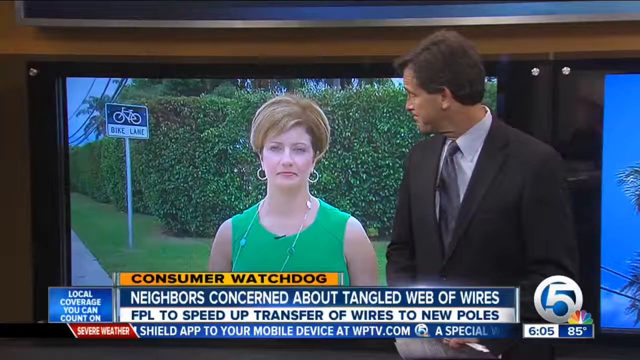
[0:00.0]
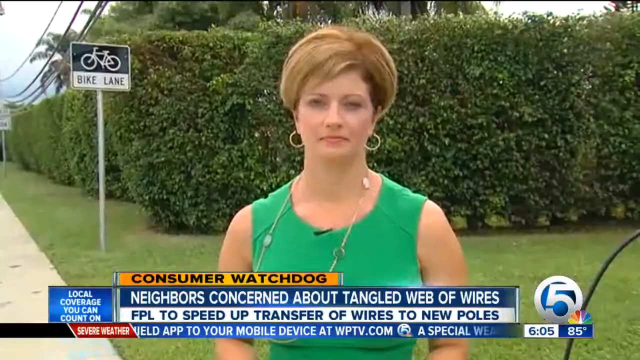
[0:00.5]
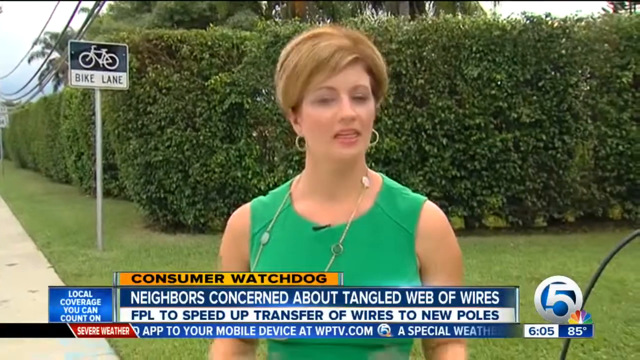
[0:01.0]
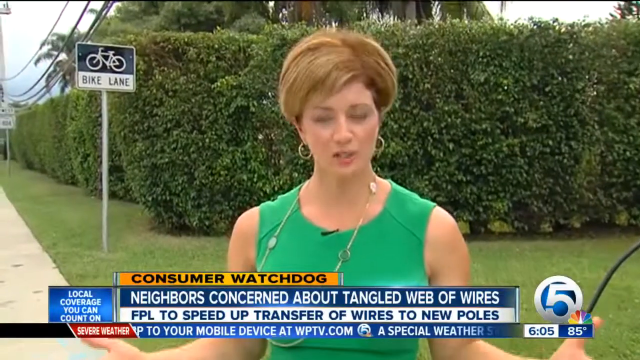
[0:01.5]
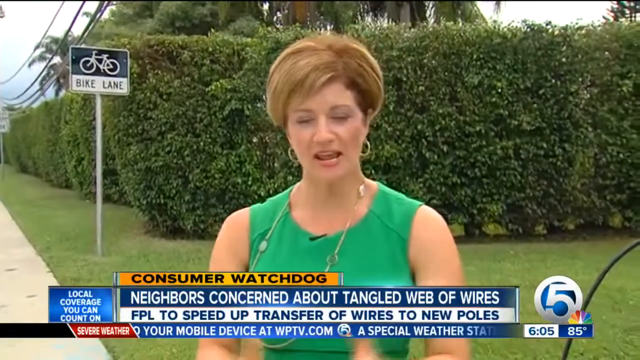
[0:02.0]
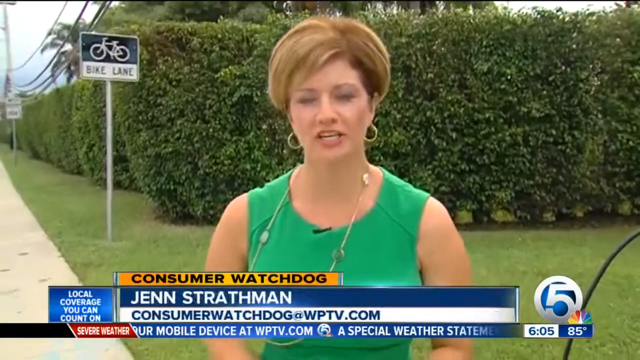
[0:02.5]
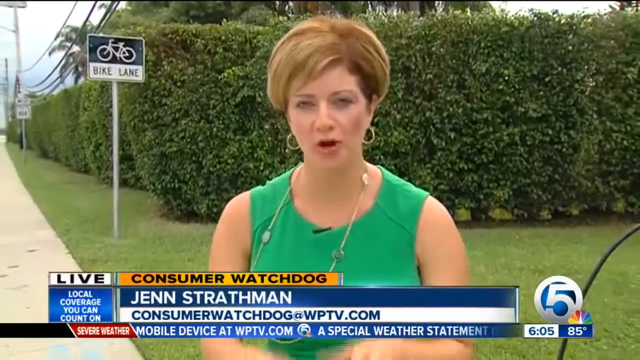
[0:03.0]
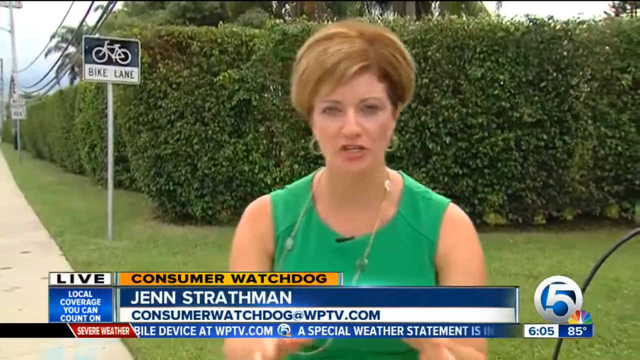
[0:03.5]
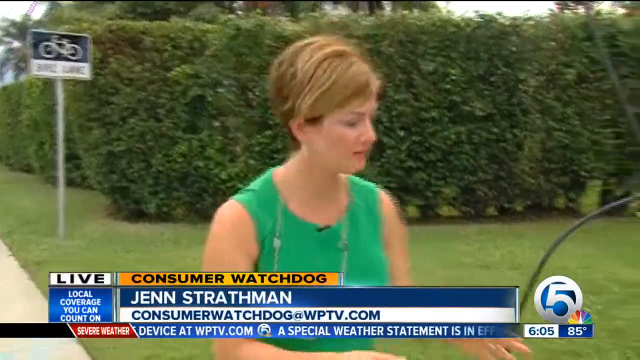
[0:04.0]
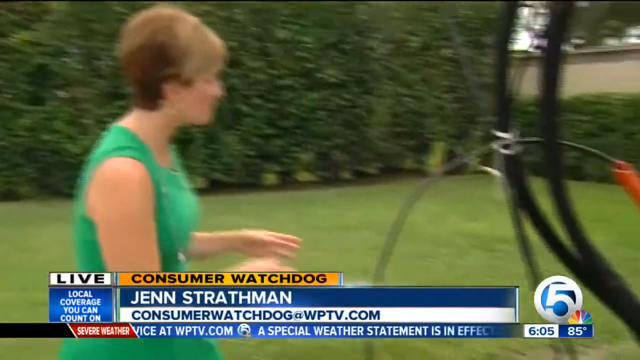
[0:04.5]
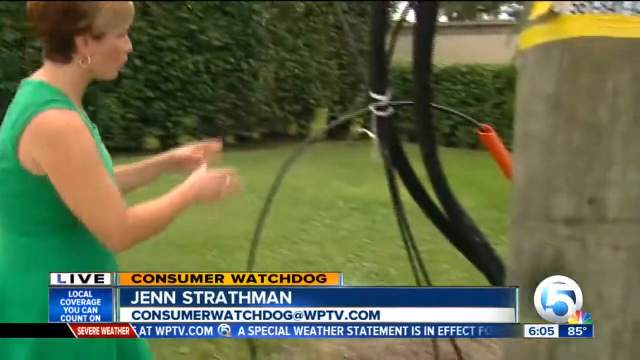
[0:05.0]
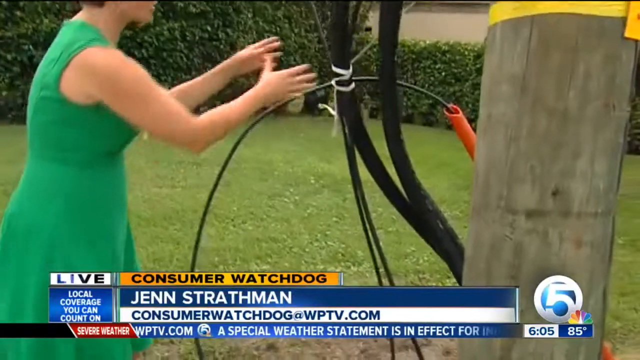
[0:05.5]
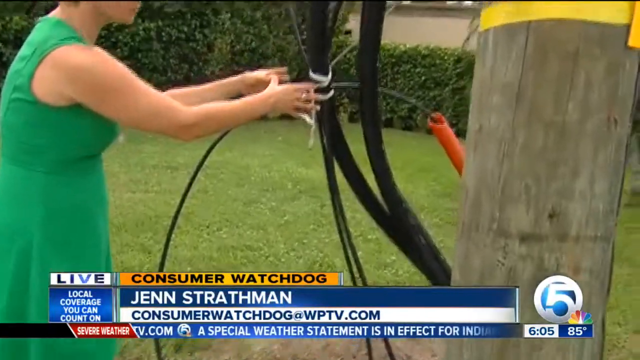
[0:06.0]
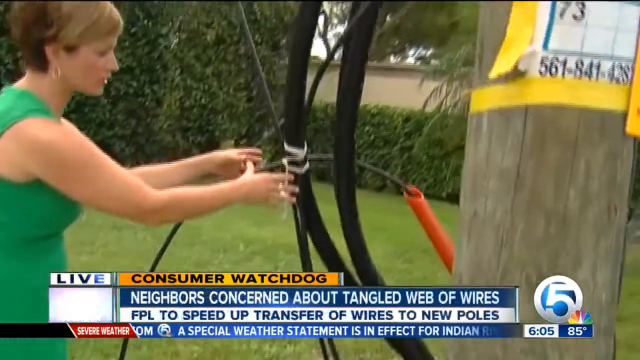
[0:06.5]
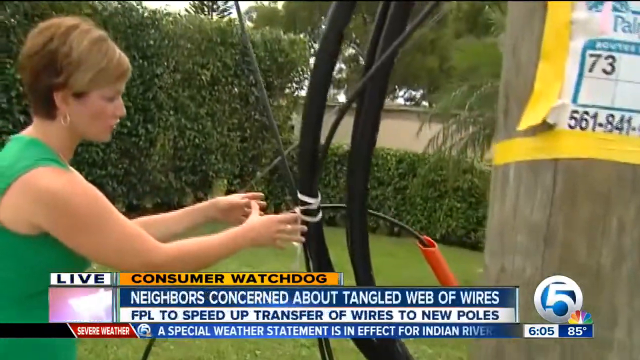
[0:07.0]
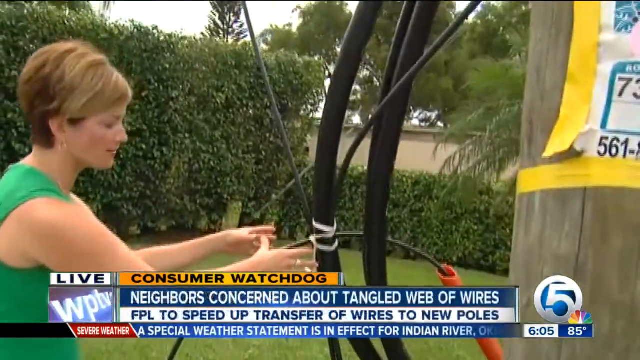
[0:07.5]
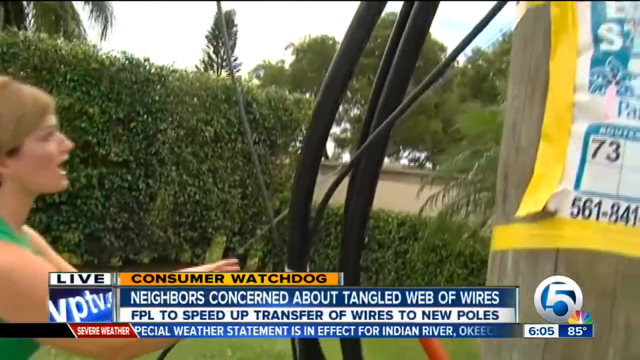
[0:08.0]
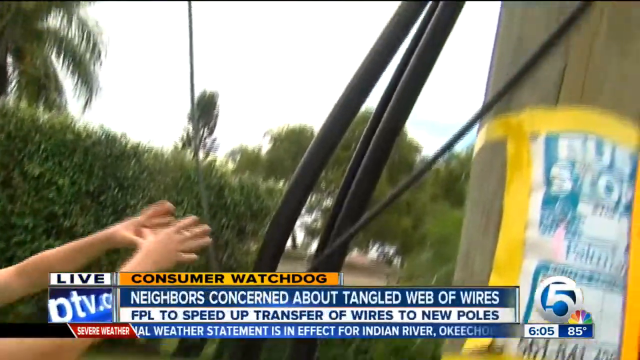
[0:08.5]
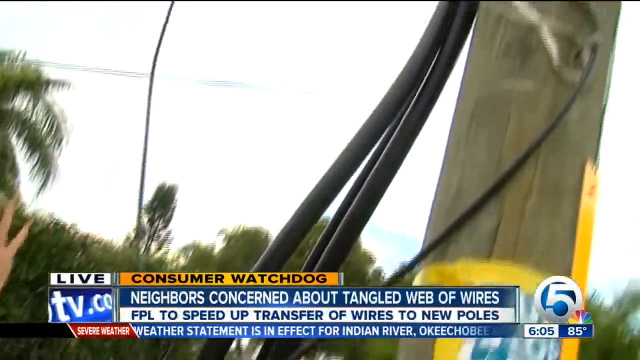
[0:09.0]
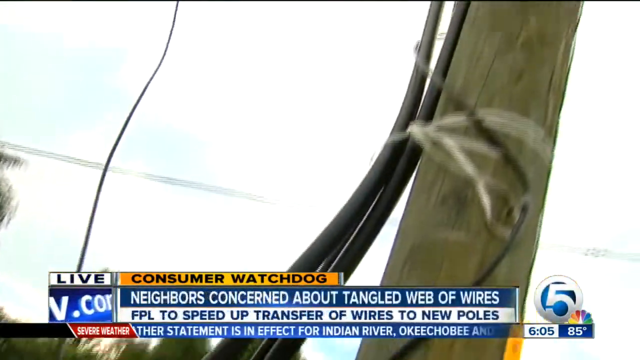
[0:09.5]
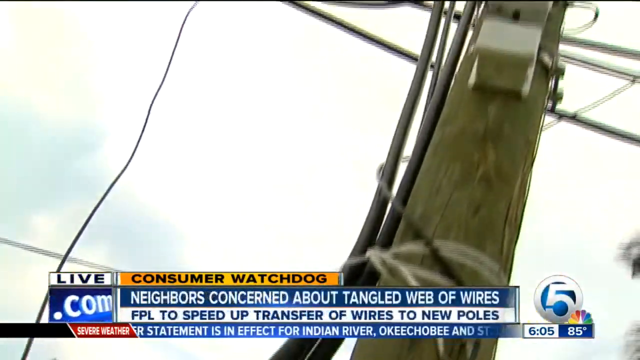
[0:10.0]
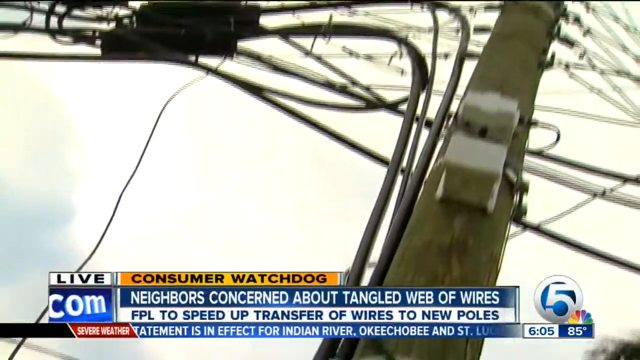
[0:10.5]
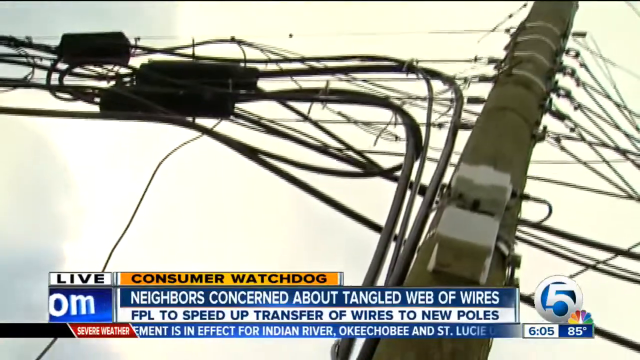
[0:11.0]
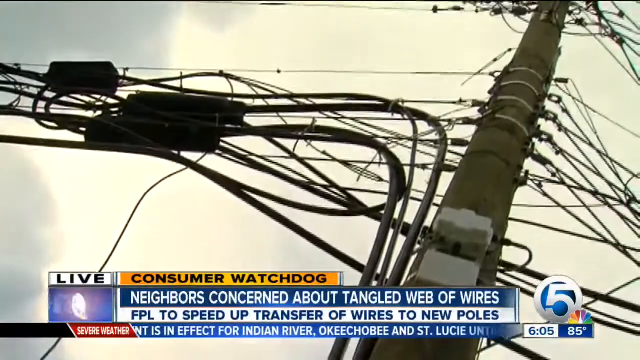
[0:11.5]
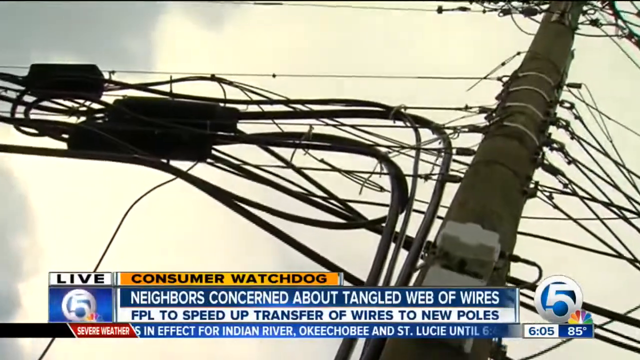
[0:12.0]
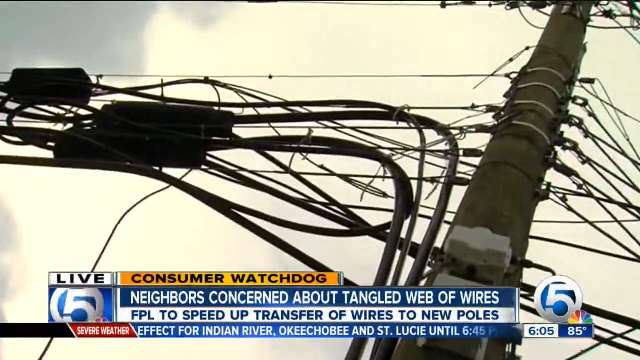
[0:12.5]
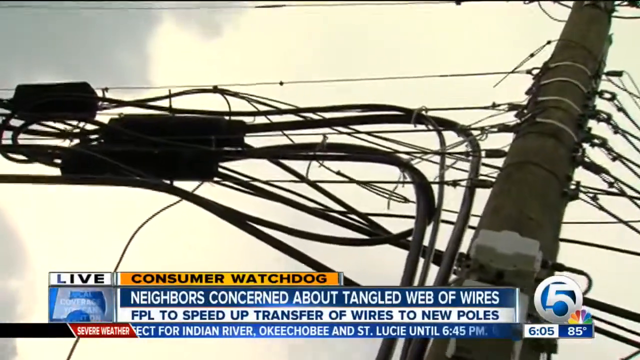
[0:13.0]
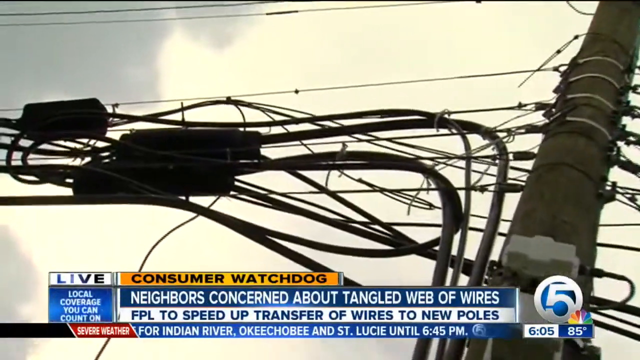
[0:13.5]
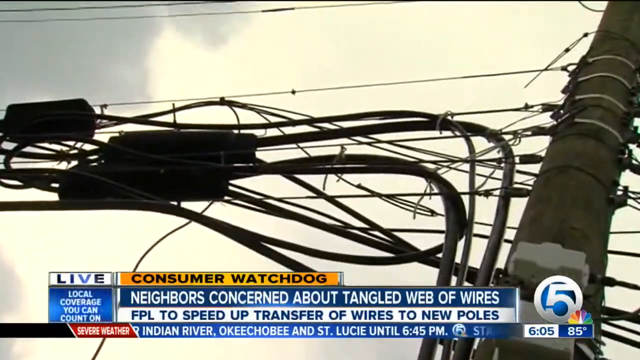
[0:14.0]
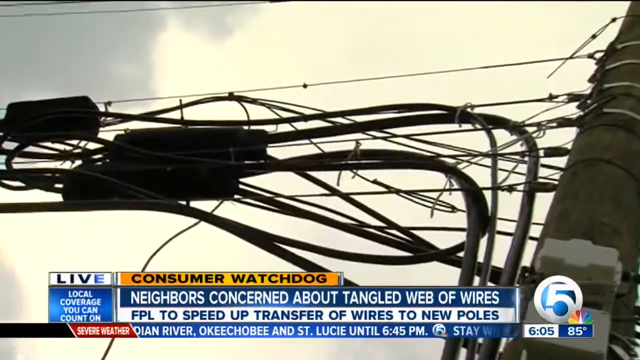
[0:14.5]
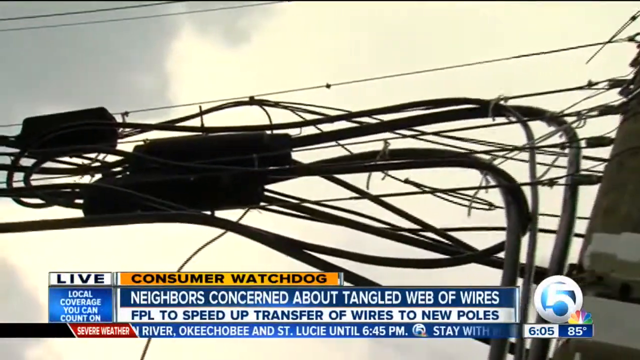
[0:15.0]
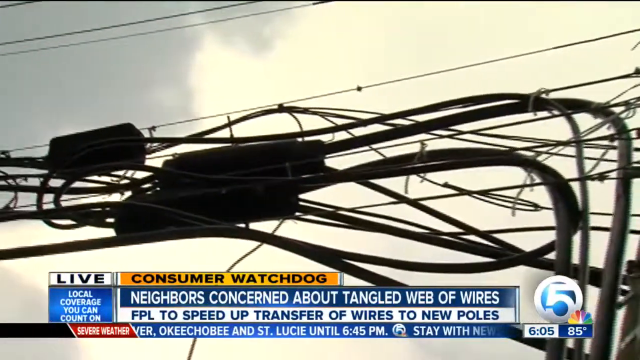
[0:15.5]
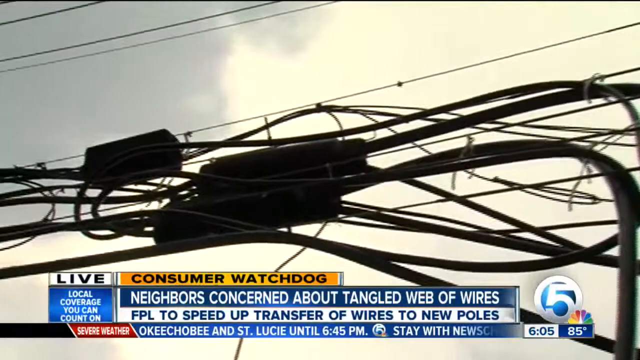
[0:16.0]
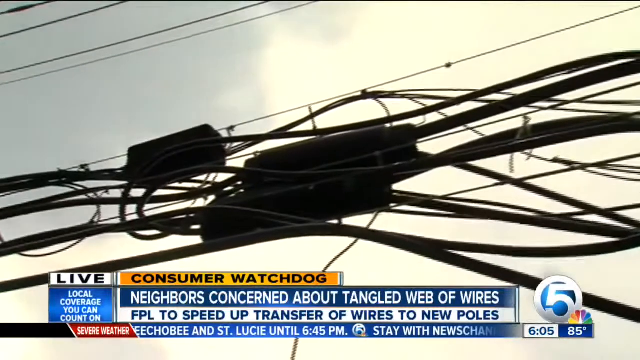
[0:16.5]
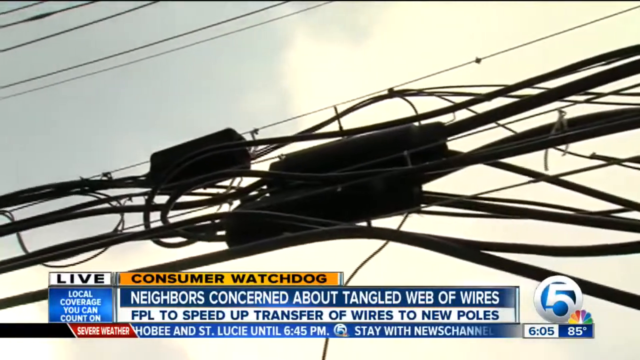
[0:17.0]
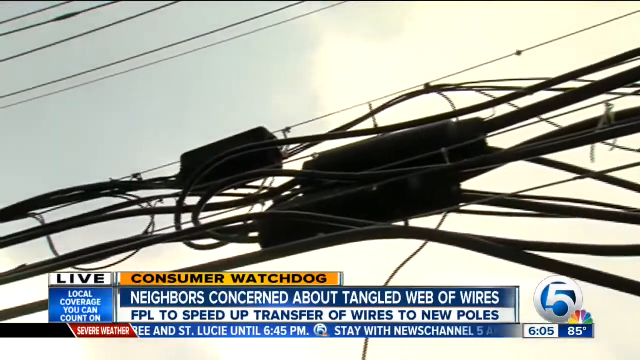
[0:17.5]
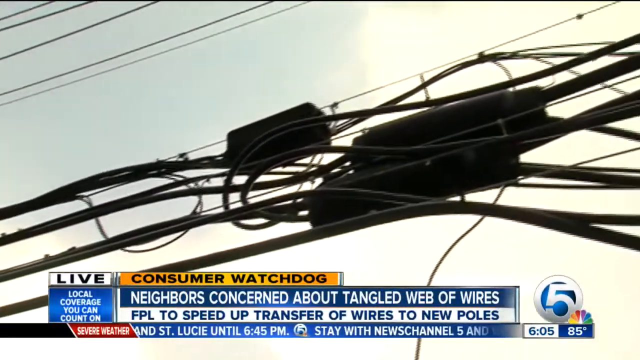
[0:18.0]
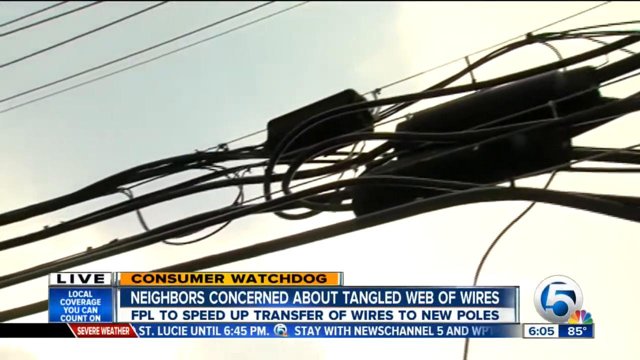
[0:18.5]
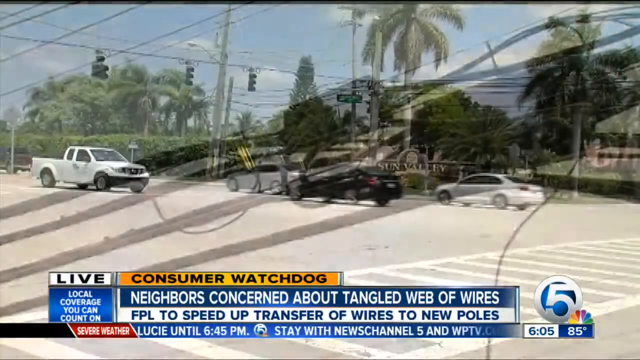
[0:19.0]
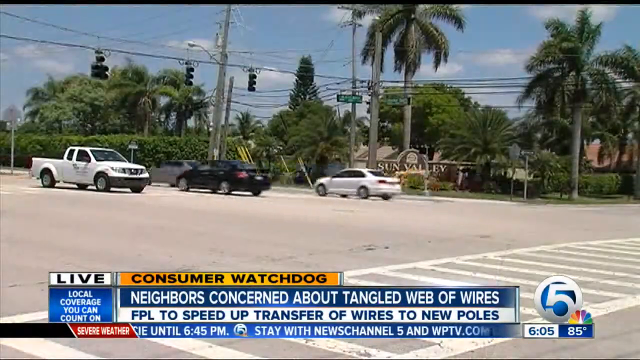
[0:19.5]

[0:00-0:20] A reporter with short brownish-blonde hair, wearing a green dress, stands in front of the camera and speaks into it. At the bottom of the screen a rectangular yellow section reads "consumer watchdog", and underneath it is the text "neighbor is concerned about tangled web of wires". The camera moves slightly and then pans right toward some wires, and the reporter turns in that direction too. She has her hands around about four or five huge black wires next to a telephone pole. The camera pans up the pole, following the wires to the top, where a whole bunch of wires seem very disorganized. The view then changes to a street view of a busy street, almost like an intersection, with many cars going up and down the street.